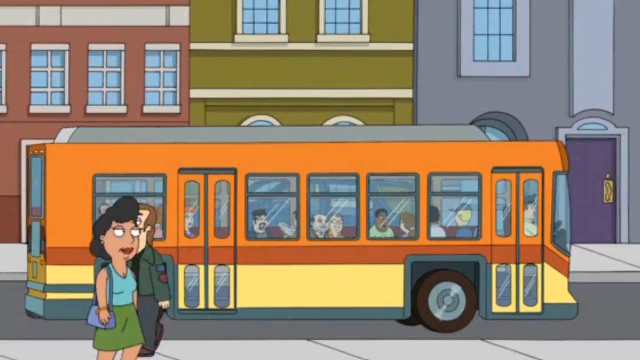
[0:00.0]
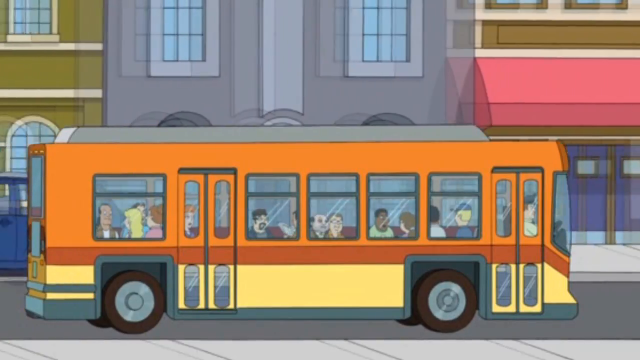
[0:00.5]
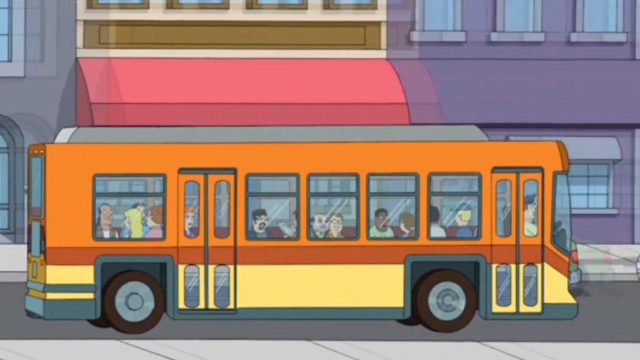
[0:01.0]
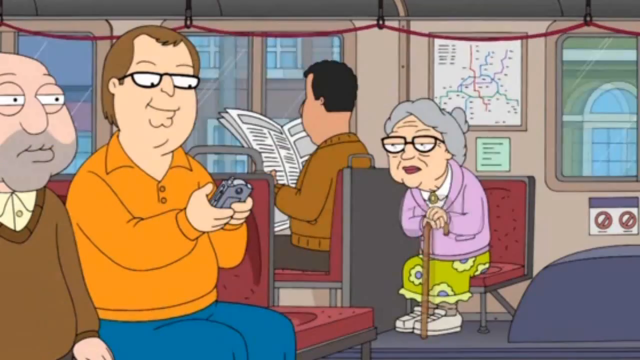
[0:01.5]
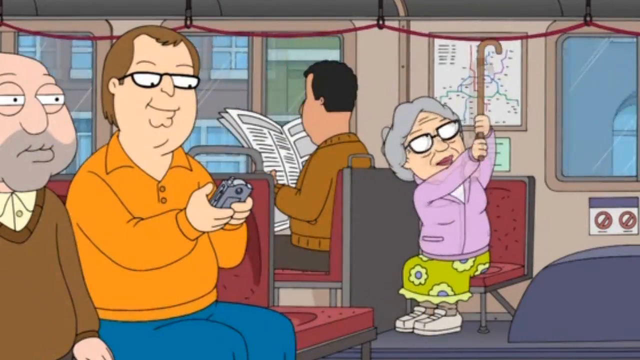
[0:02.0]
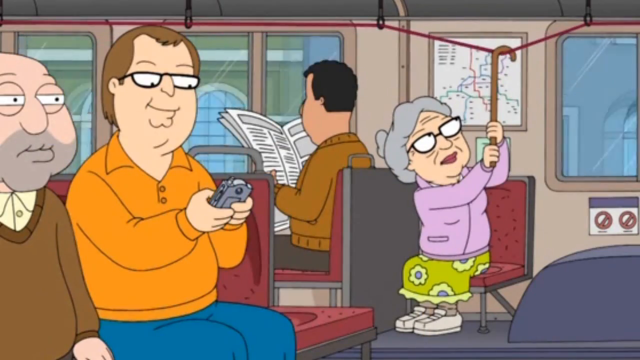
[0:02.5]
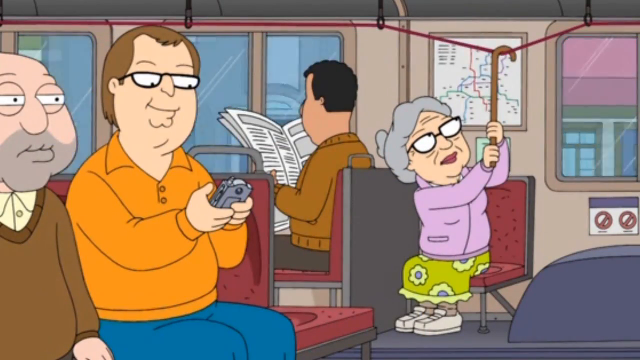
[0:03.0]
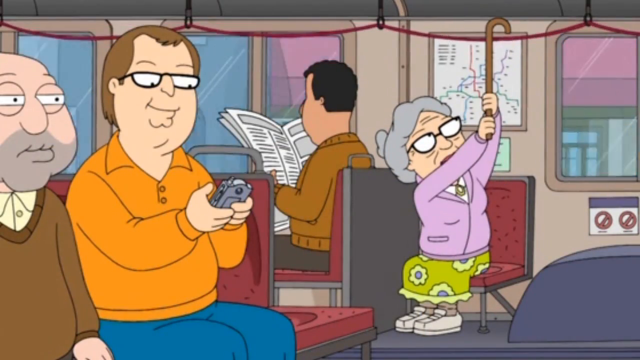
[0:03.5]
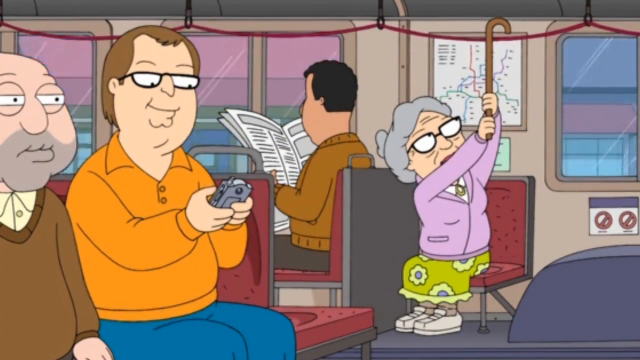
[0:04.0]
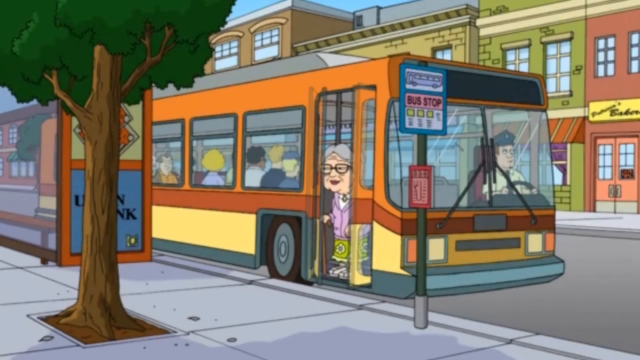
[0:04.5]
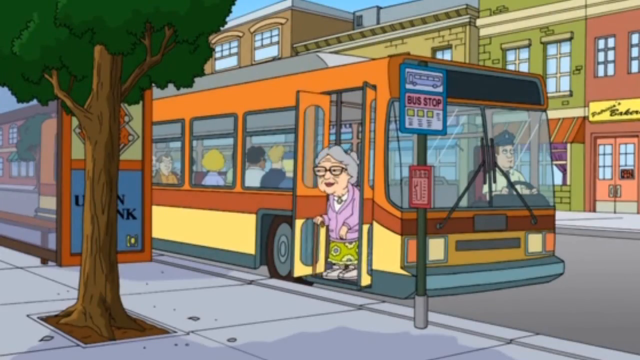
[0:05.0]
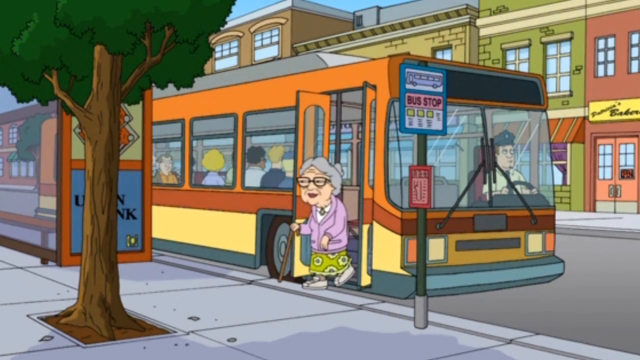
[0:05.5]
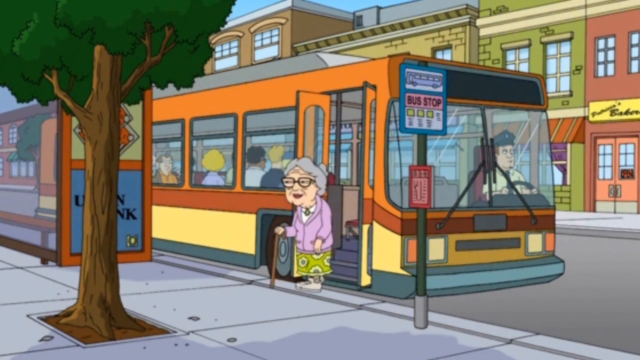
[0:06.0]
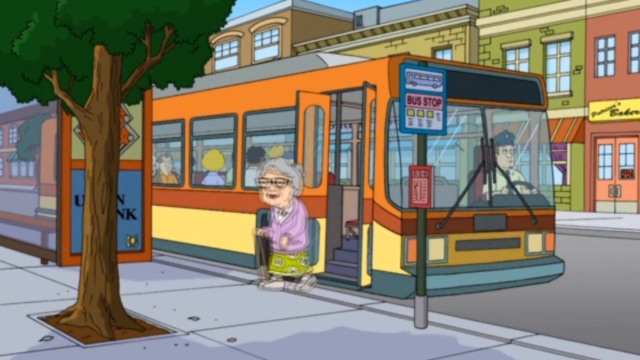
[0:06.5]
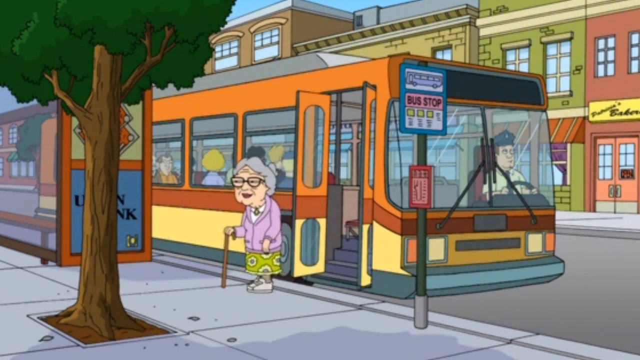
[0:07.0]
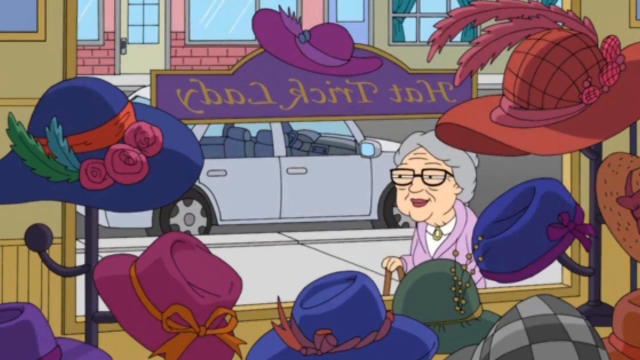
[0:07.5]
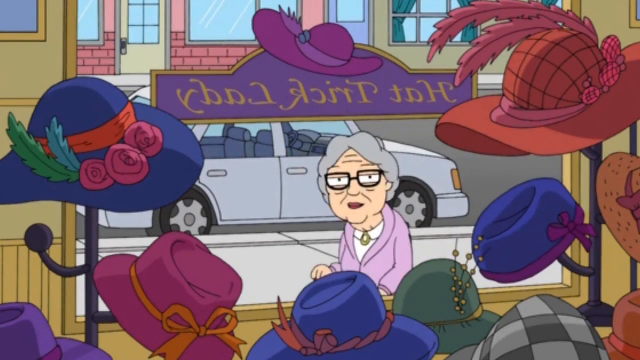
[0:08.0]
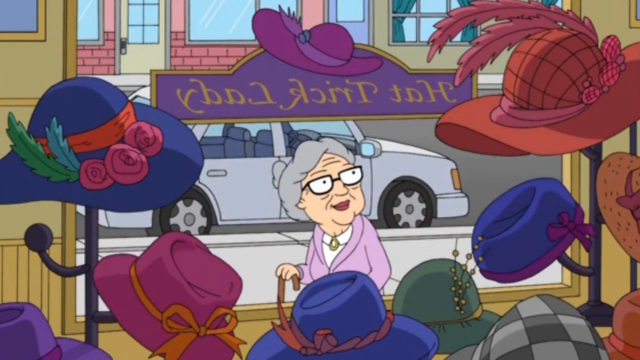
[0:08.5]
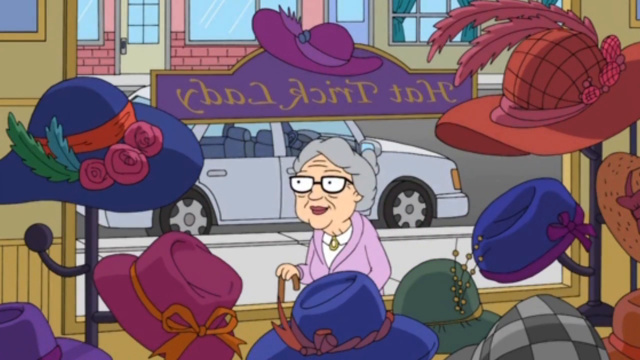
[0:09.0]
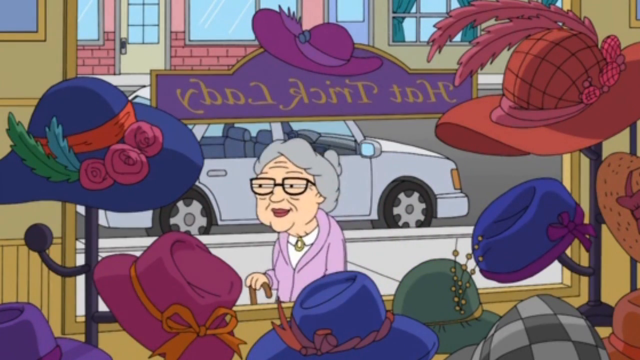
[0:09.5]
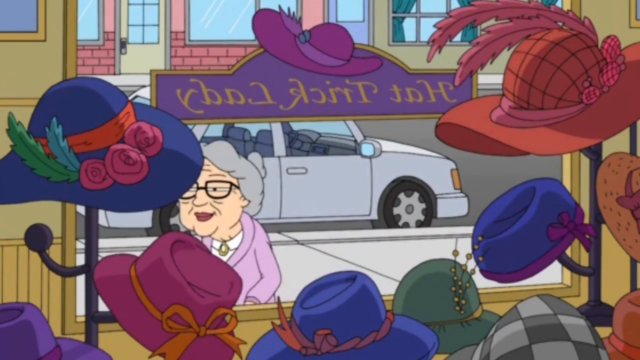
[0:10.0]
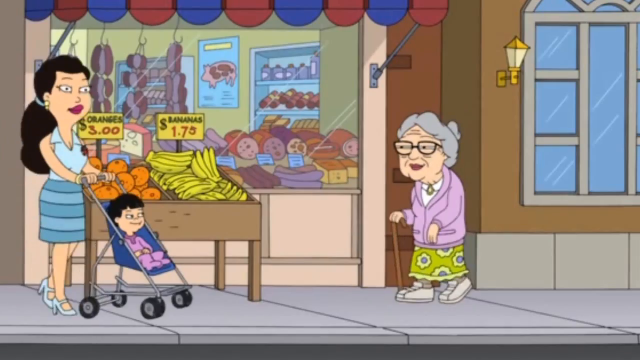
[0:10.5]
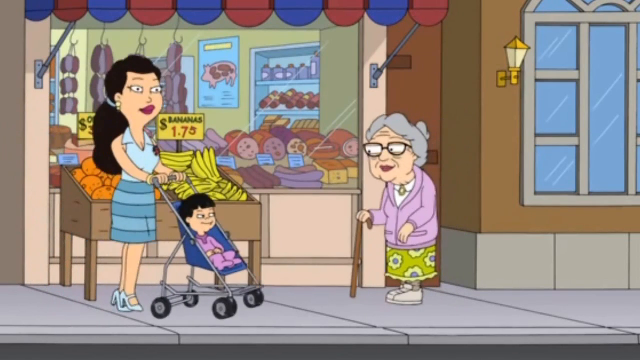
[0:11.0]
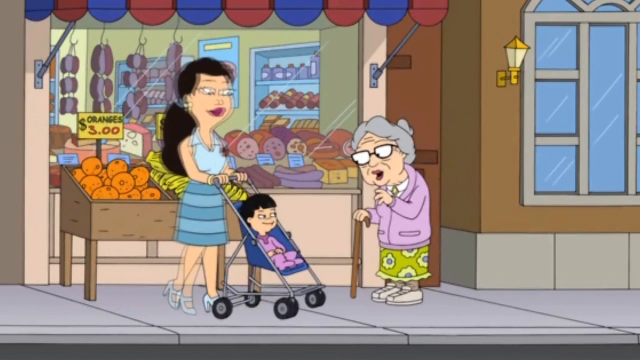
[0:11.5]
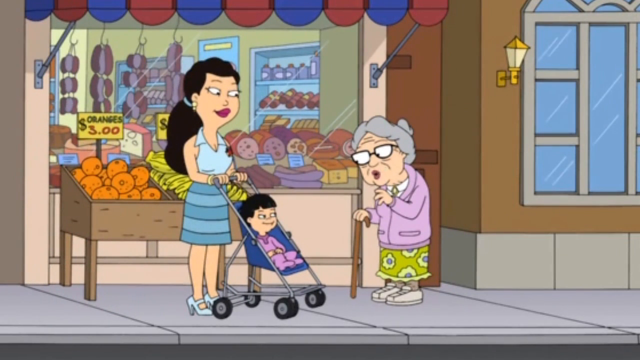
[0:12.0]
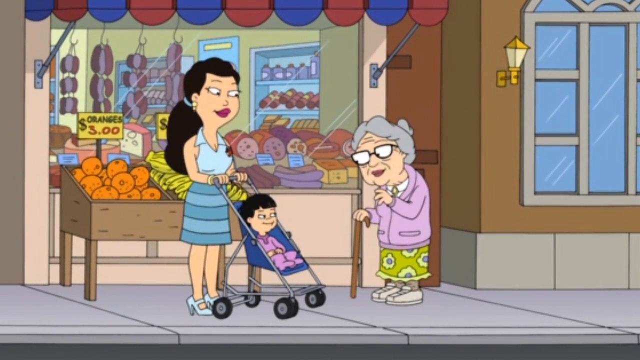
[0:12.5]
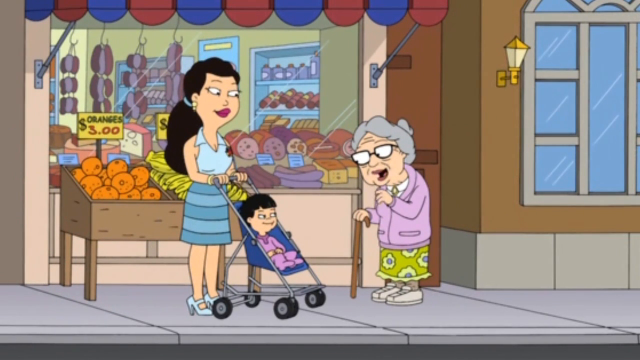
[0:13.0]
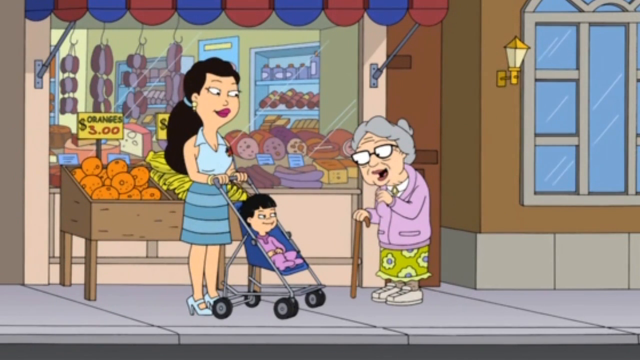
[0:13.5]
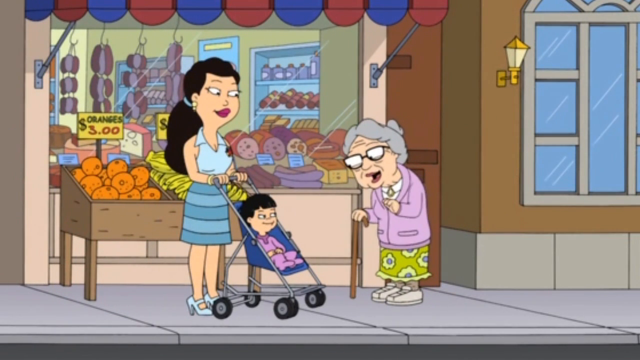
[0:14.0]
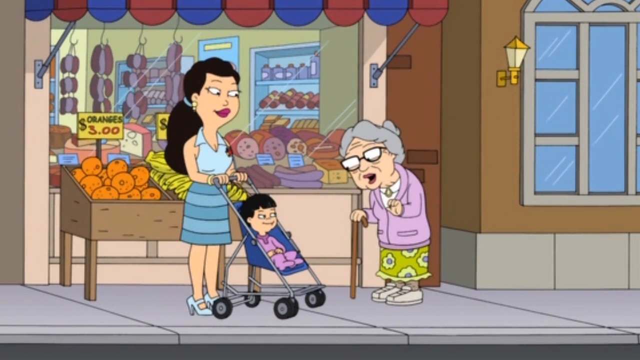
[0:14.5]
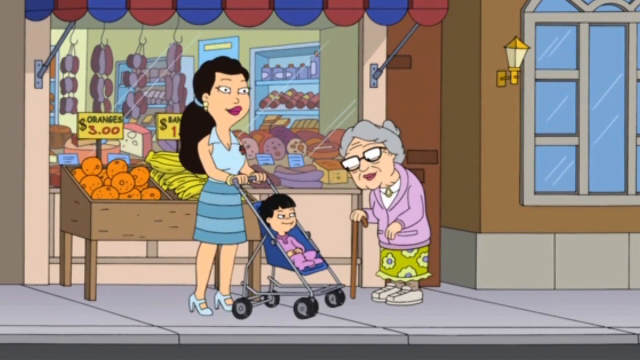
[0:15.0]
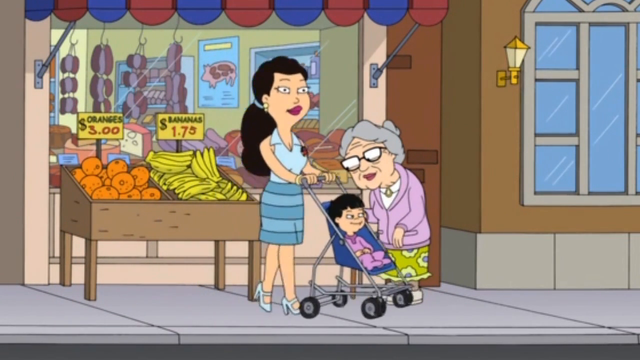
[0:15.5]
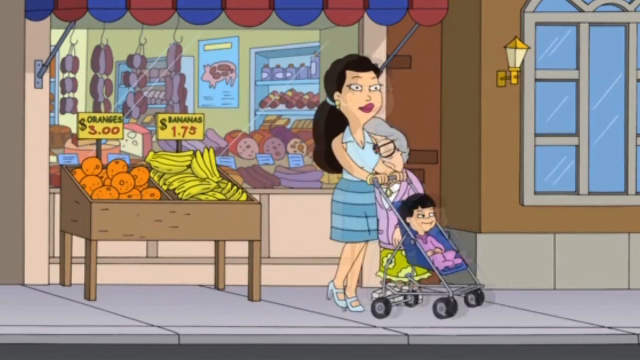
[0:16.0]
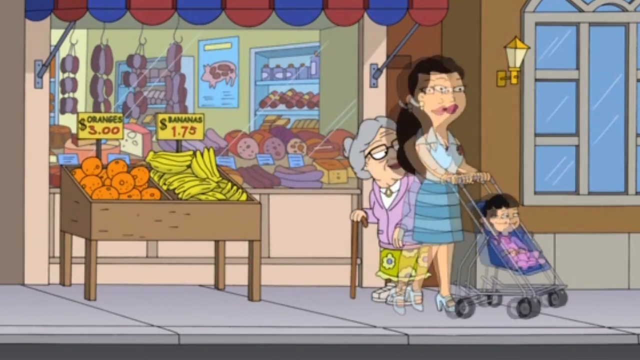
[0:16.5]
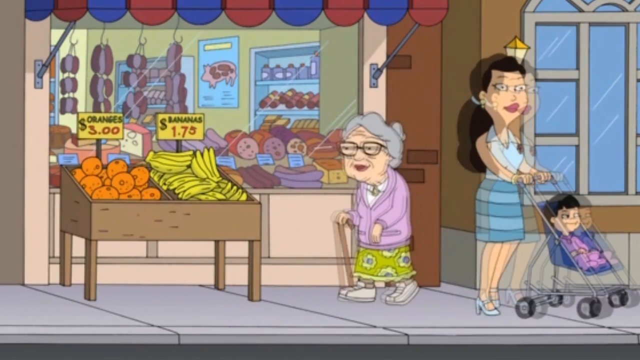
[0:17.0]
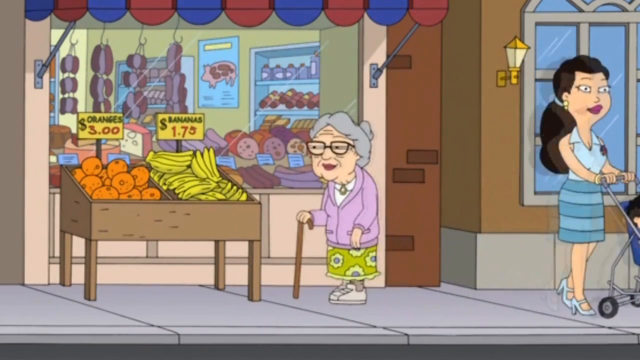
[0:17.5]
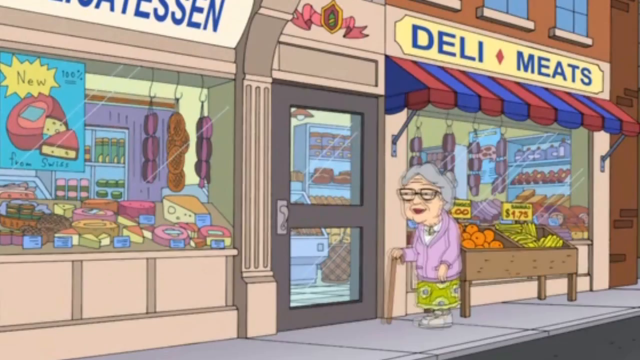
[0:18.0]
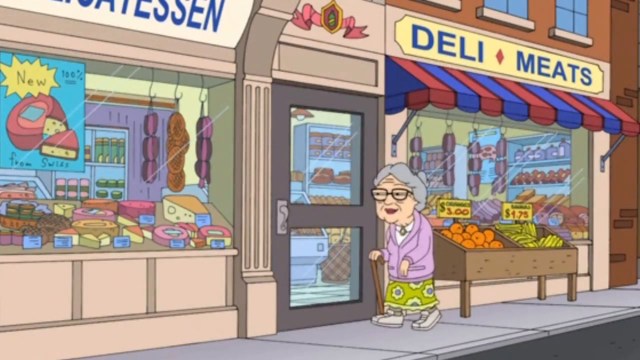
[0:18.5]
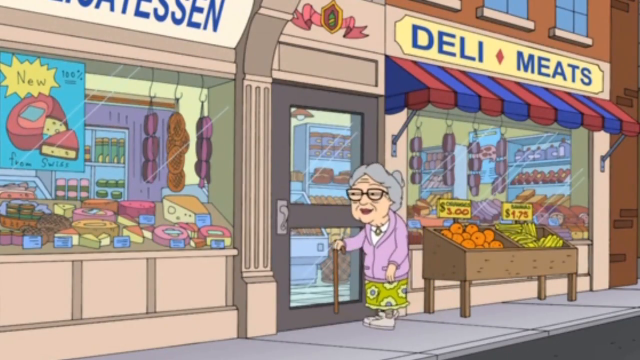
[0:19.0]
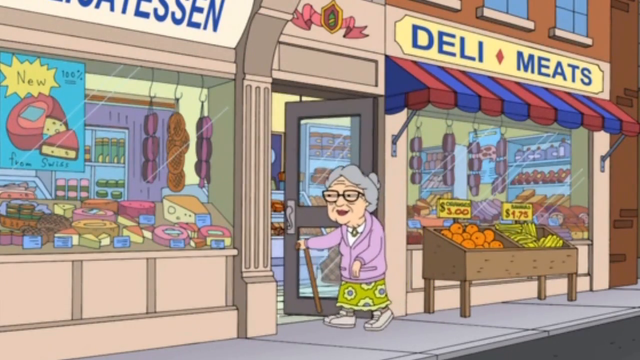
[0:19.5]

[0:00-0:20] In an animated video, an orange bus goes down a city street while some pedestrians, a woman and a man, walk in front of it. The scene cuts to the inside of the bus, where there is an old woman and some other passengers. The bus stops, and the woman gets off and walks toward a hat store. She looks in the window at a bunch of hats for sale, smiles, and is very pleased with them. She runs into a woman with a child in a stroller, interacts with them, and talks to them, saying how nice the baby looks. She presumably goes by a fruit stand, where there are some fruits, and then goes into a delicatessen to see what they have to offer inside.